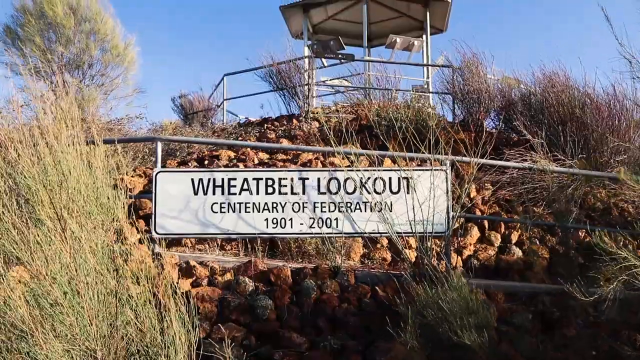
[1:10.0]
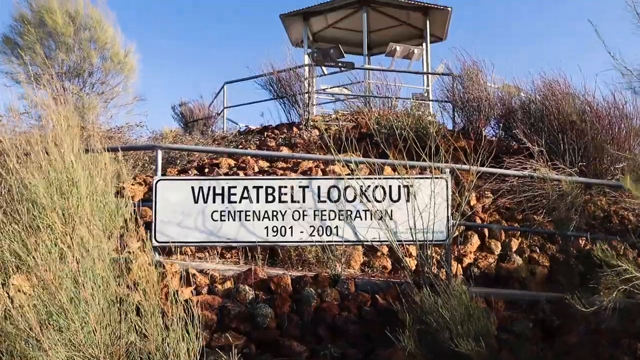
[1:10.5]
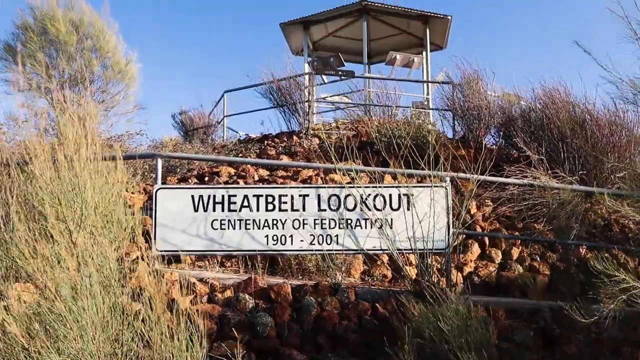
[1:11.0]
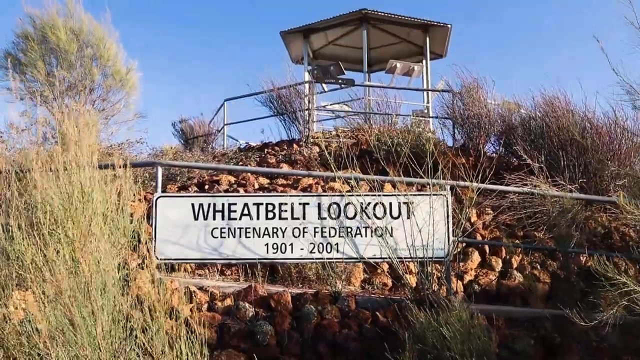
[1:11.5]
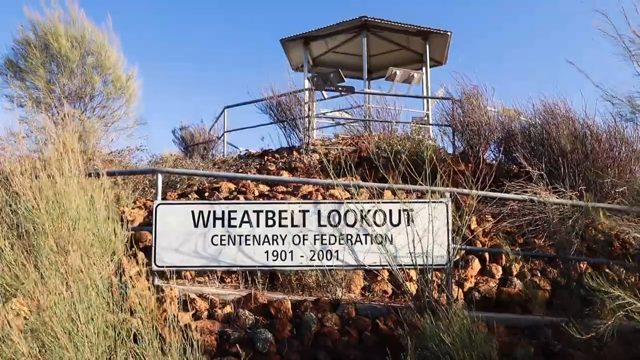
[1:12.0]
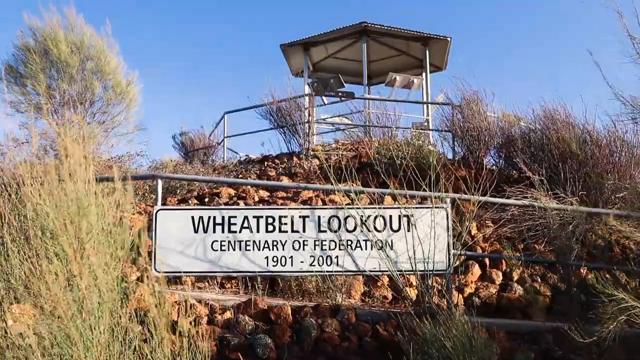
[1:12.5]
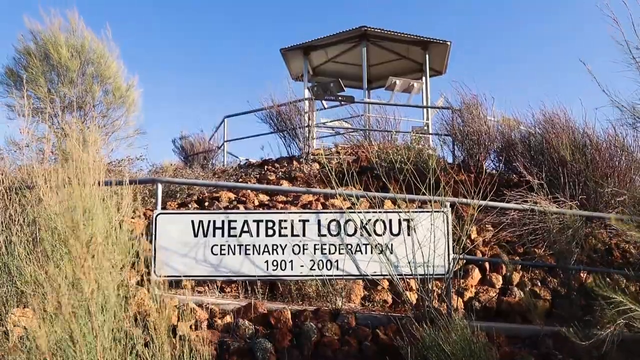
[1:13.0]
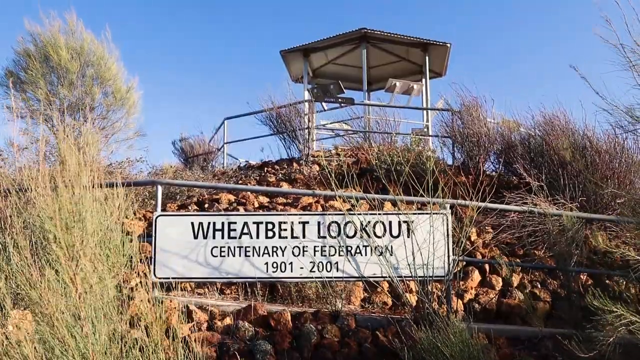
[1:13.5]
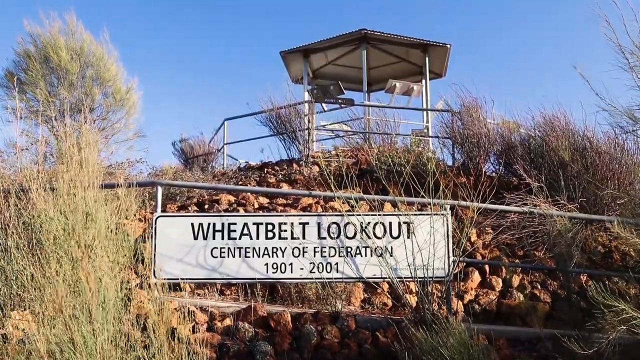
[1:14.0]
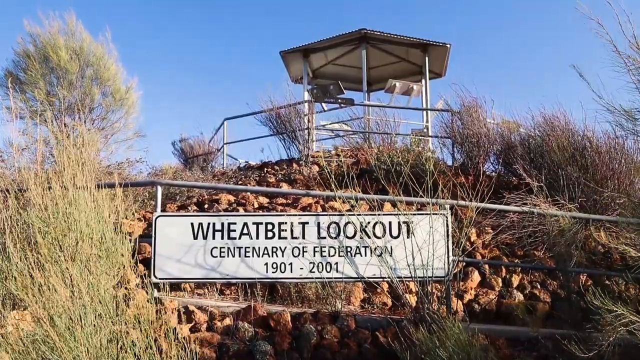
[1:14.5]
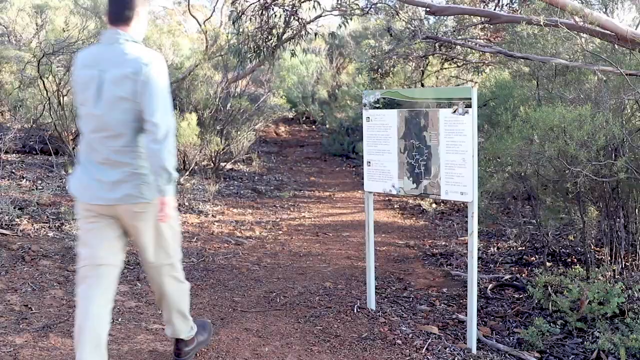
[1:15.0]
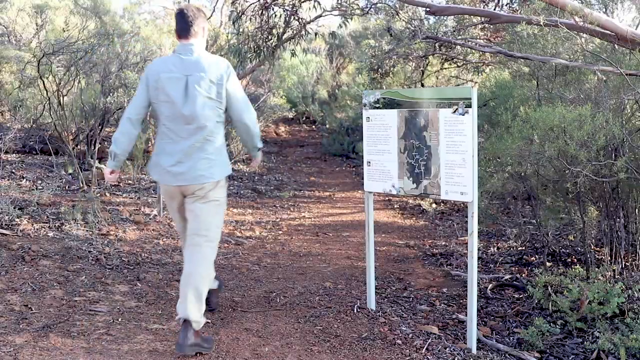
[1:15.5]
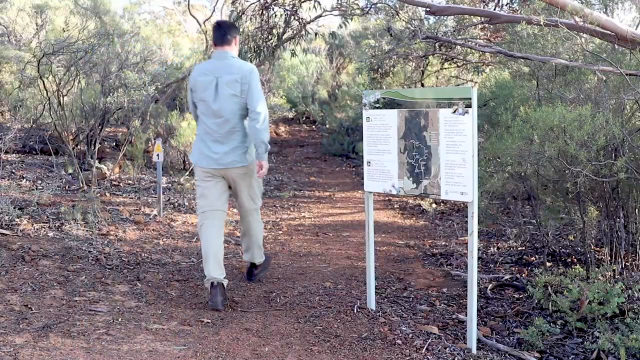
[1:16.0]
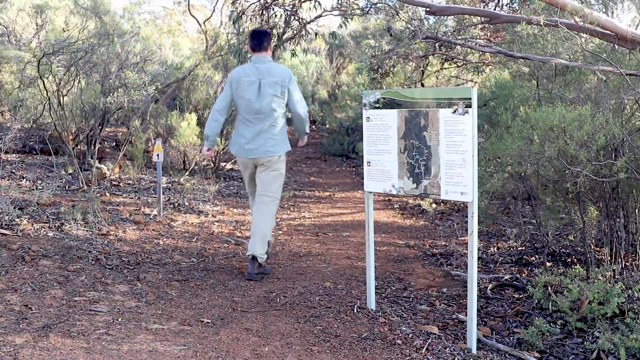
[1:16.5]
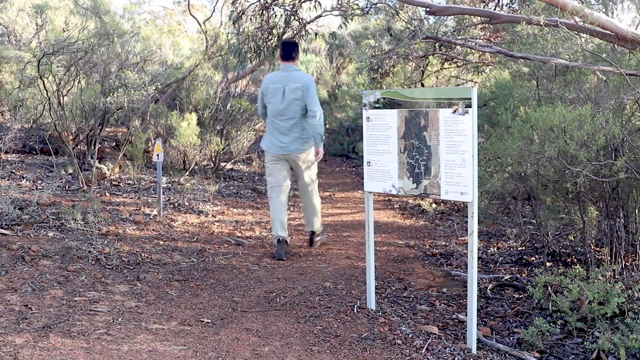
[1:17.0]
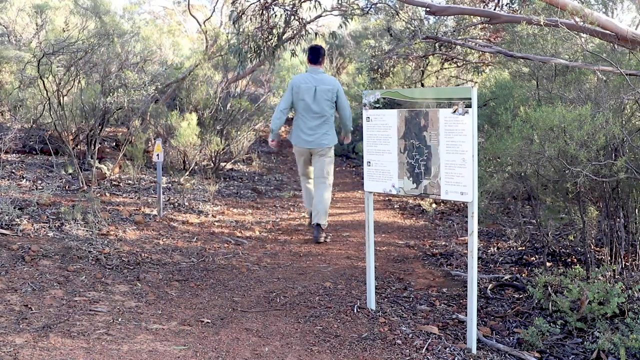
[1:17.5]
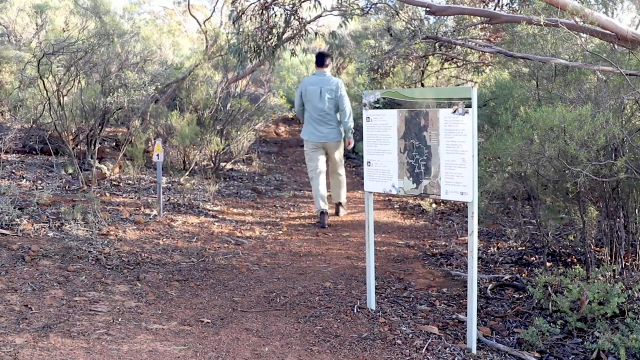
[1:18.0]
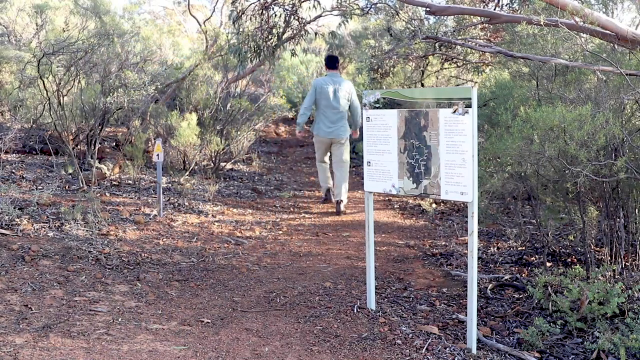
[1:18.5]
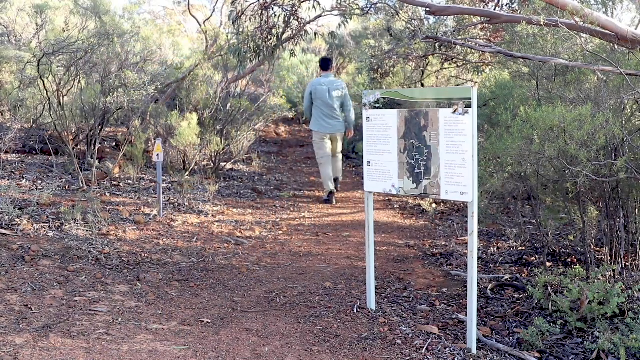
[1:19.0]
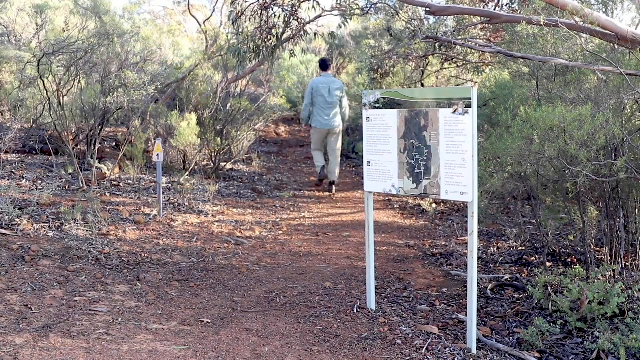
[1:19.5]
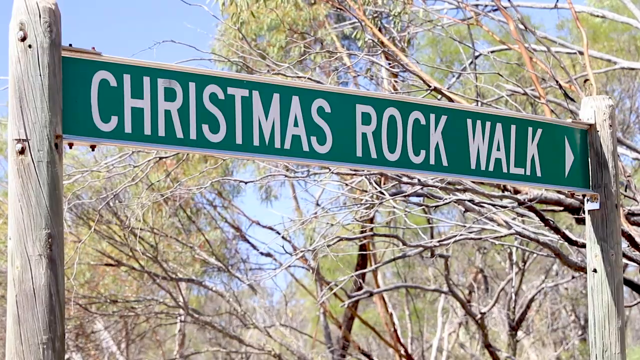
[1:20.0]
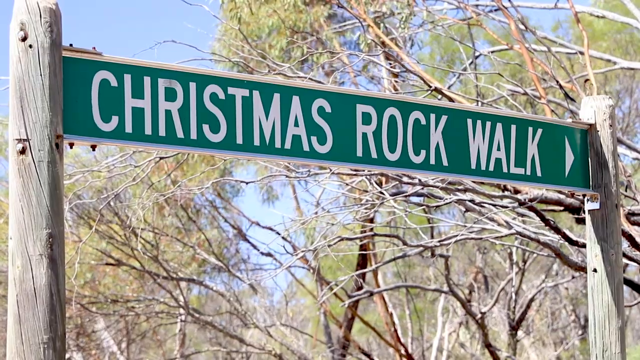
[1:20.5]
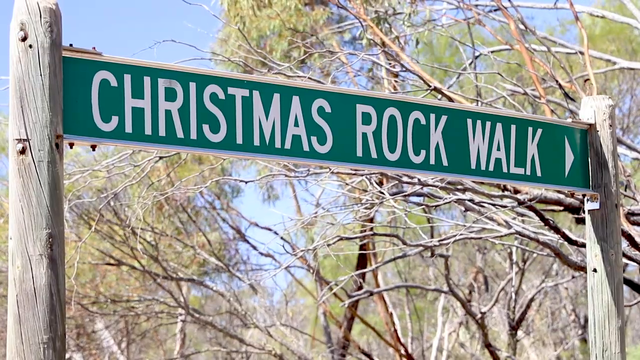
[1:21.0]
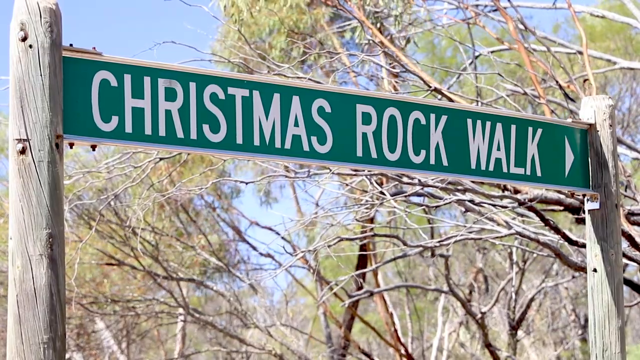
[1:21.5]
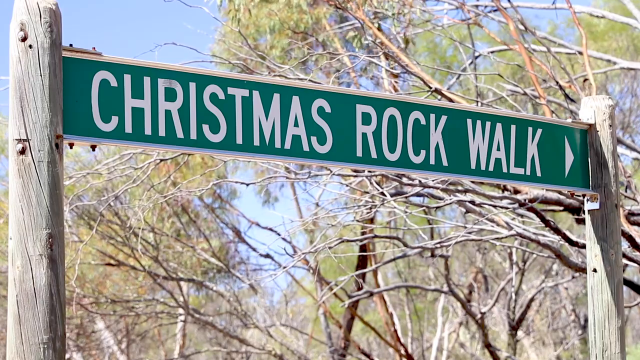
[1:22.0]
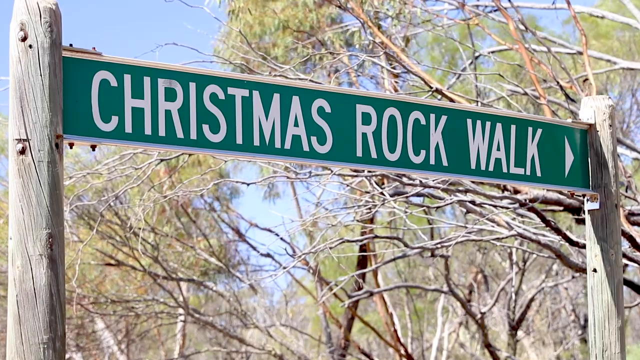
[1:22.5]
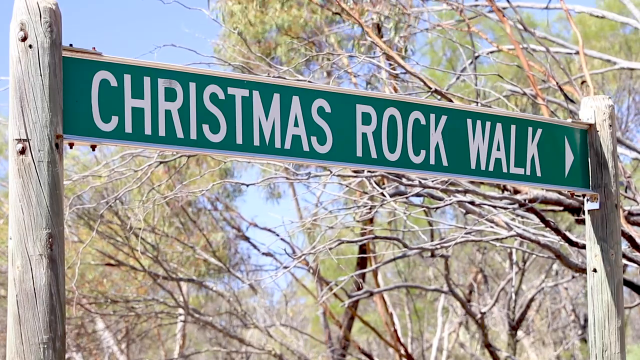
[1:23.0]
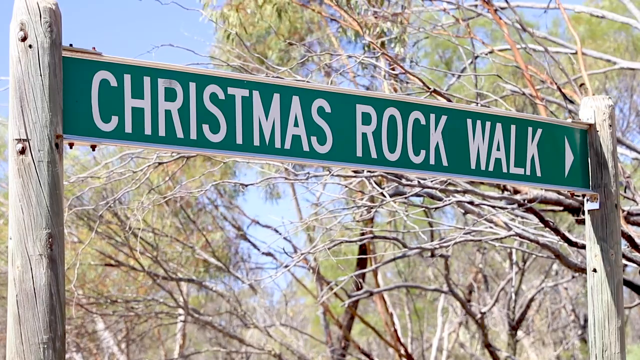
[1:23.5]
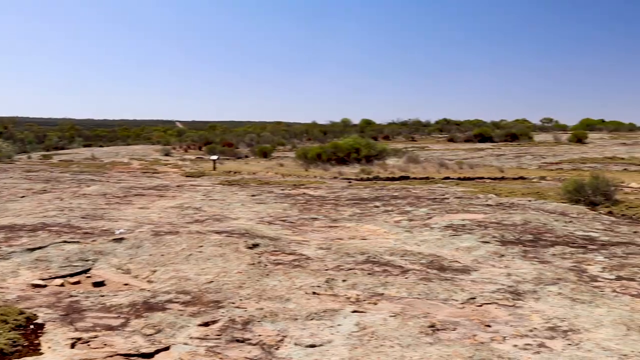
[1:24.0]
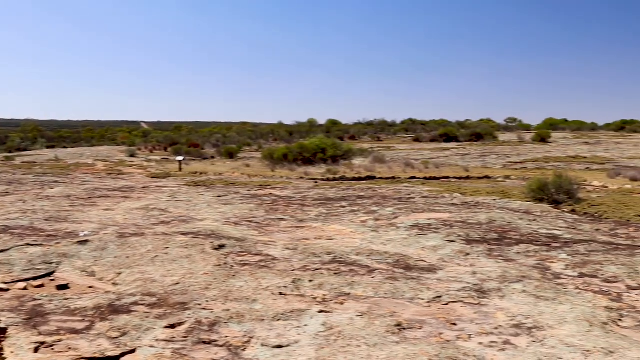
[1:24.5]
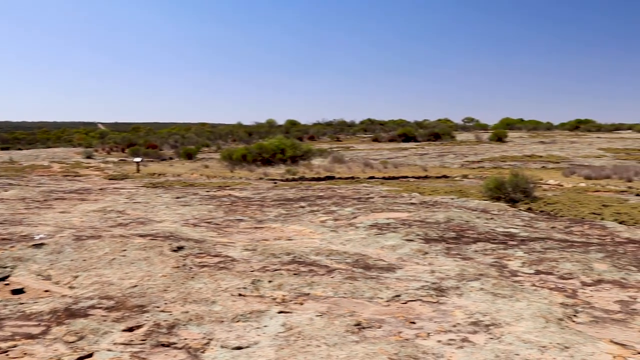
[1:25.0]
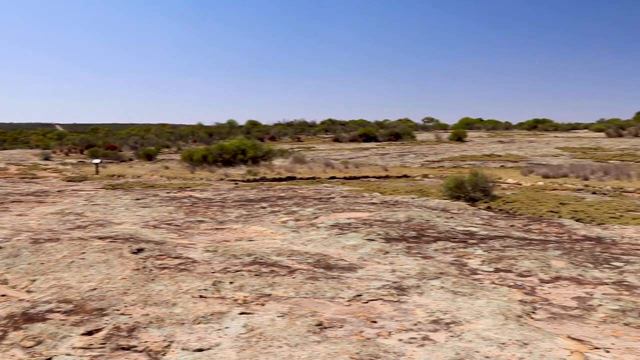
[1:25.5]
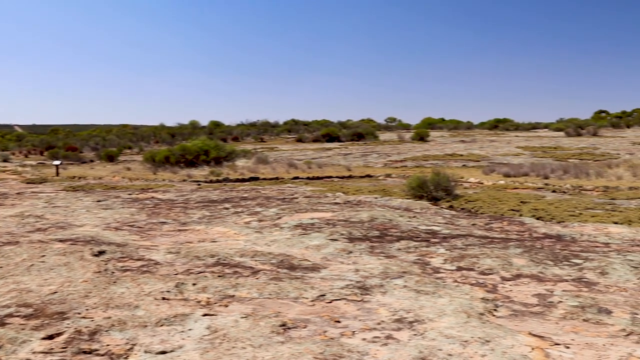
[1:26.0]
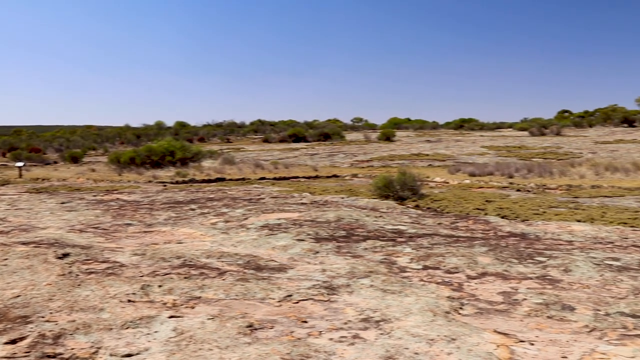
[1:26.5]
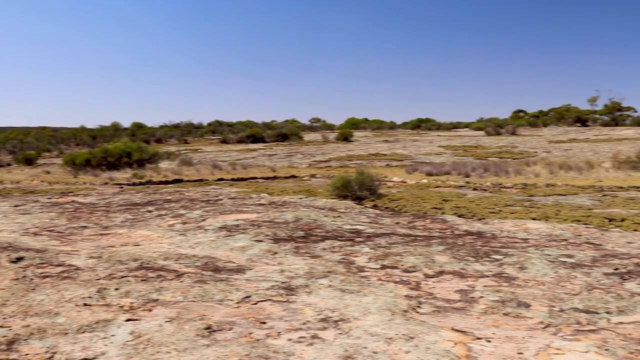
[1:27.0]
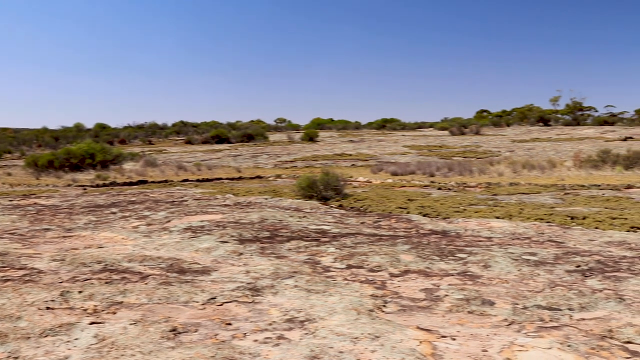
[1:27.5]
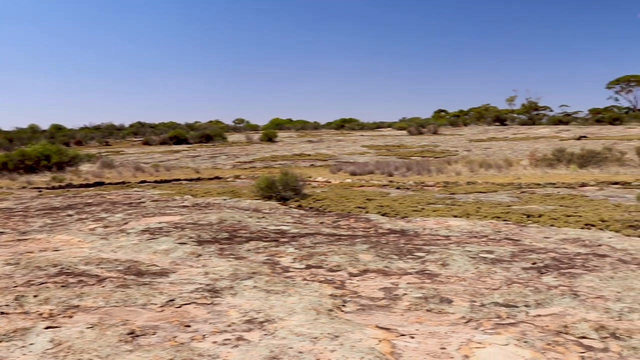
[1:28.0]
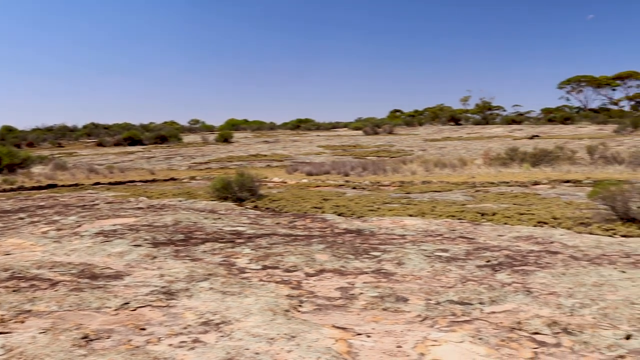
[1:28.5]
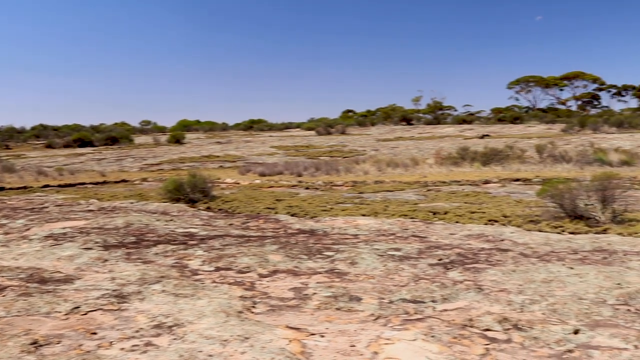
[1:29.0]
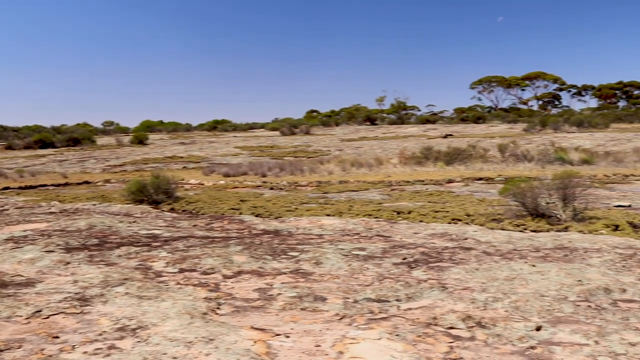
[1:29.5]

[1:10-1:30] The camera looks up from down the hill at the lookout, with a sign underneath reading "Wheatbelt Lookout, Centenary of Federation 1901 to 2001" and kind of a little pagoda up on top of the hillside. The area seems to have fairly park-like construction. The video cuts to a man walking down a trail away from the camera, his back visible. He passes a sign that looks like a trail map, and then a trail sign reading "Christmas Rock Walk". The camera then pans across a mostly barren landscape of bare ground, with some scrubby trees in the distance and a few scrubby bushes in the foreground.